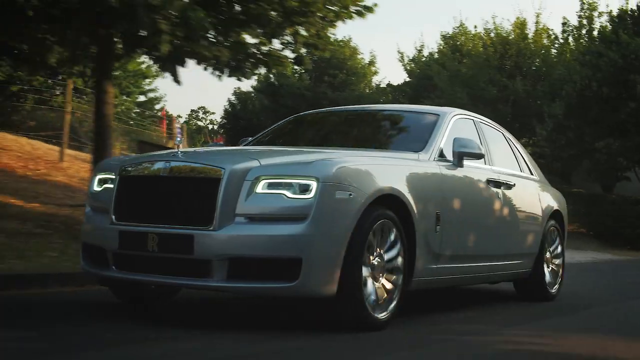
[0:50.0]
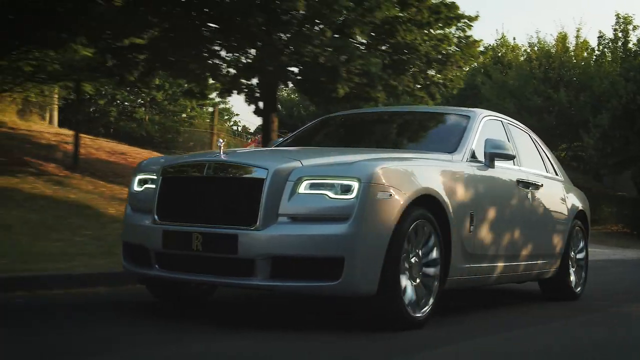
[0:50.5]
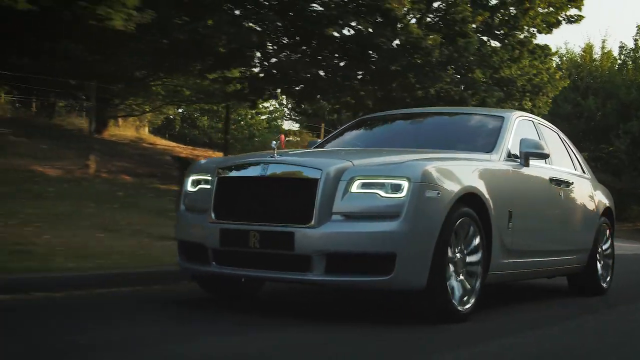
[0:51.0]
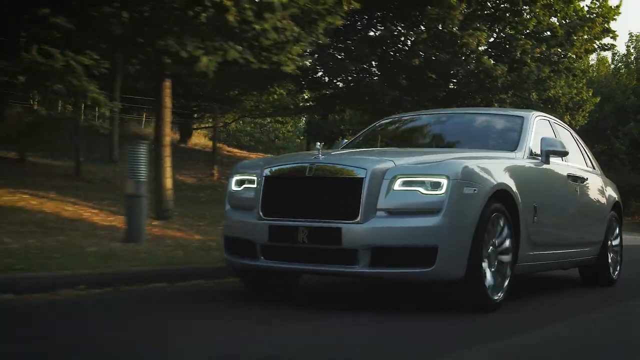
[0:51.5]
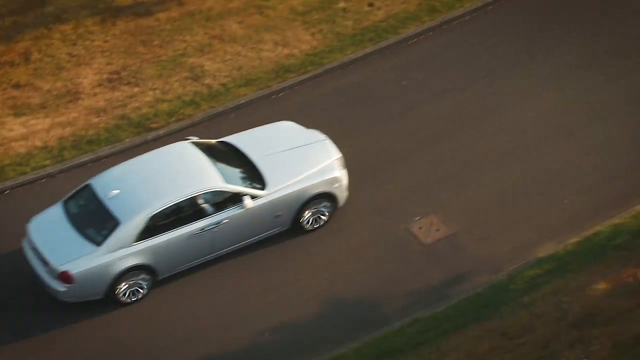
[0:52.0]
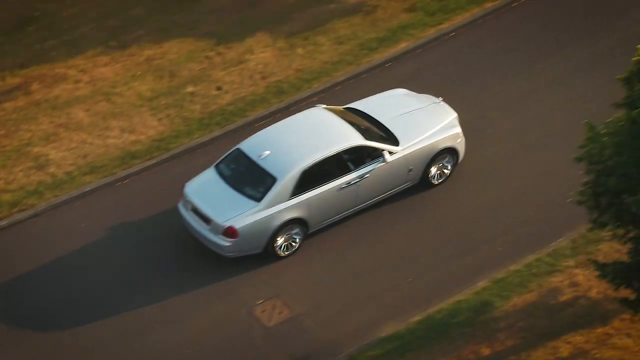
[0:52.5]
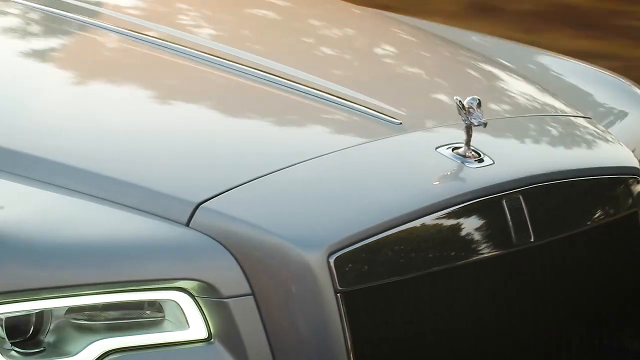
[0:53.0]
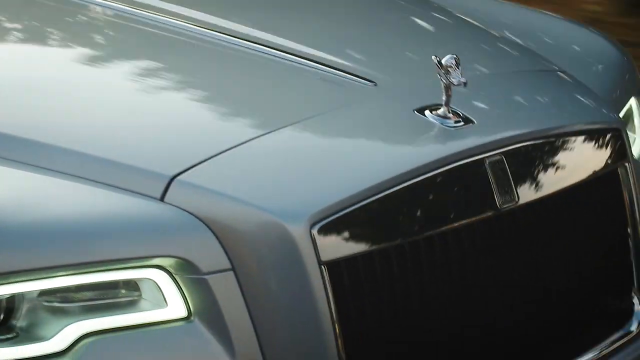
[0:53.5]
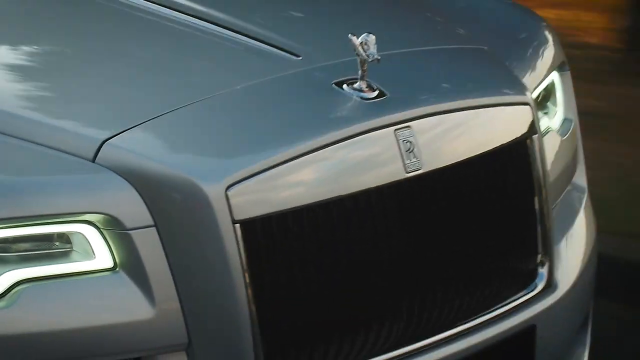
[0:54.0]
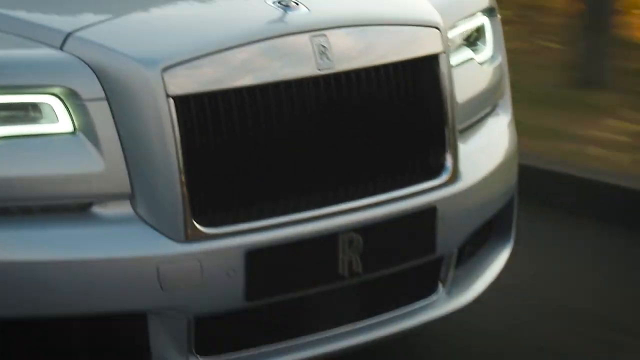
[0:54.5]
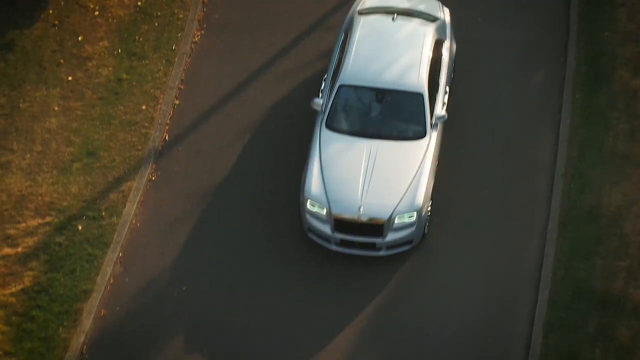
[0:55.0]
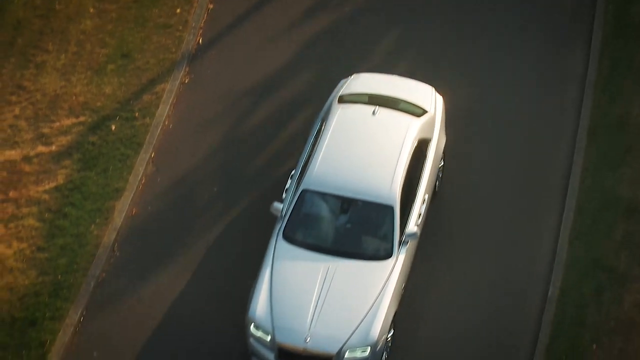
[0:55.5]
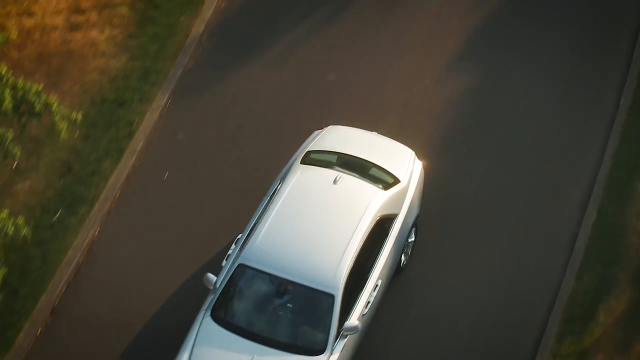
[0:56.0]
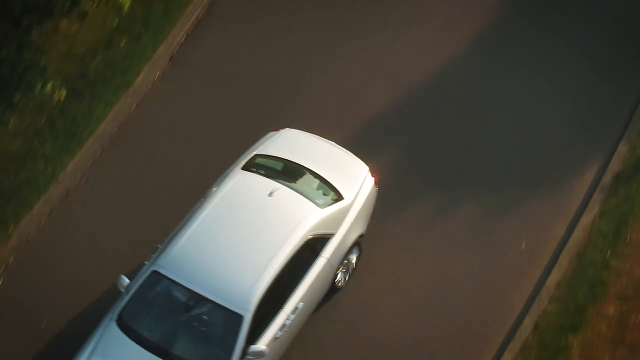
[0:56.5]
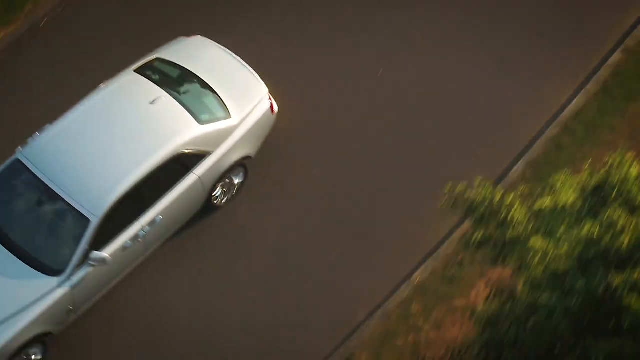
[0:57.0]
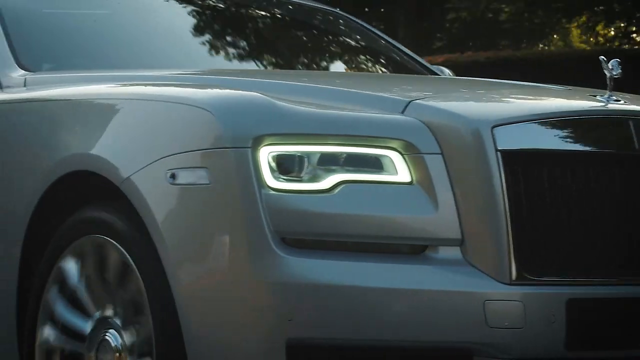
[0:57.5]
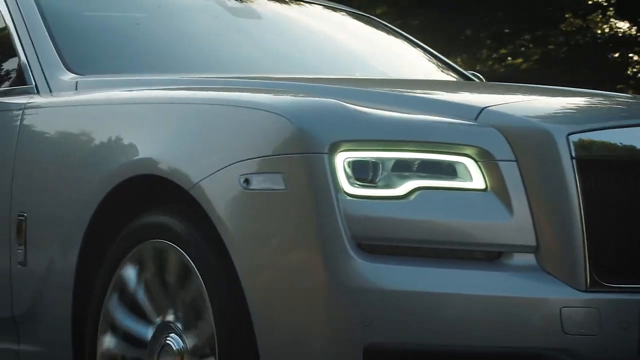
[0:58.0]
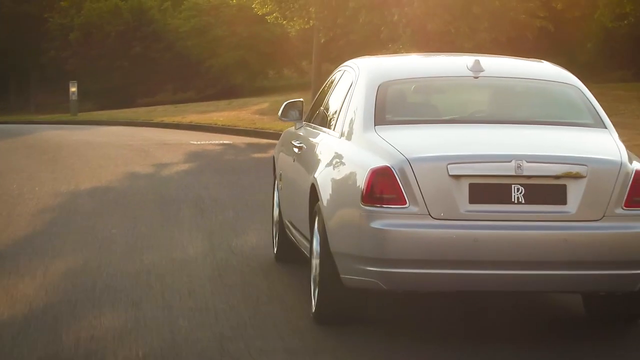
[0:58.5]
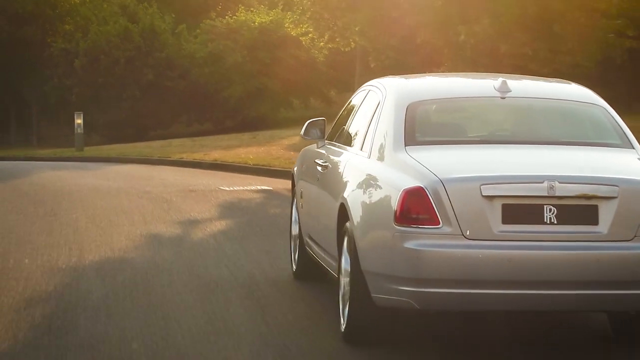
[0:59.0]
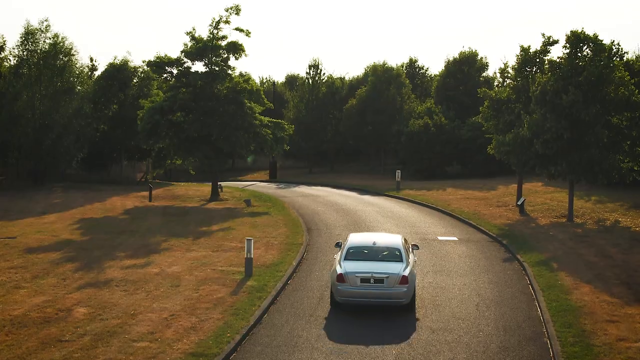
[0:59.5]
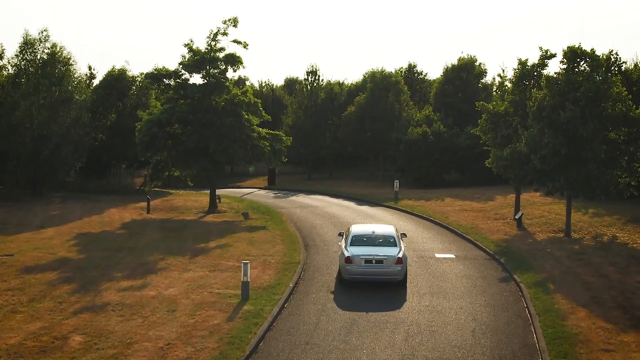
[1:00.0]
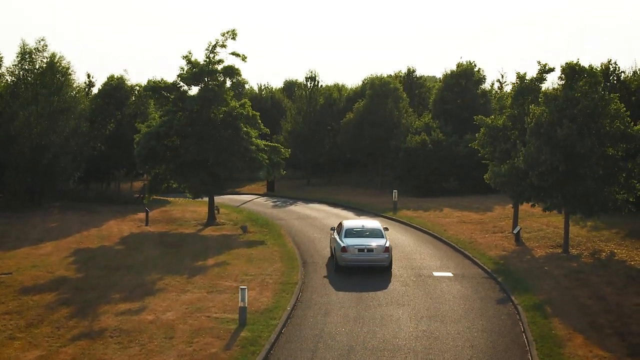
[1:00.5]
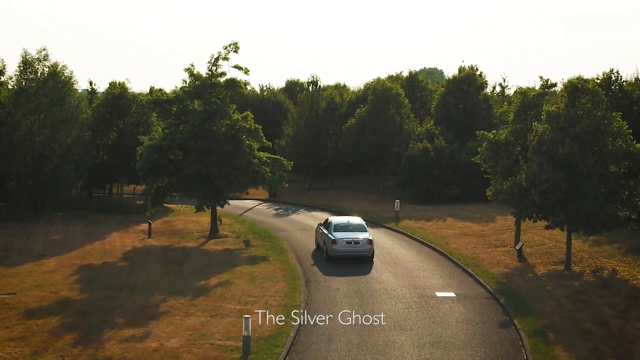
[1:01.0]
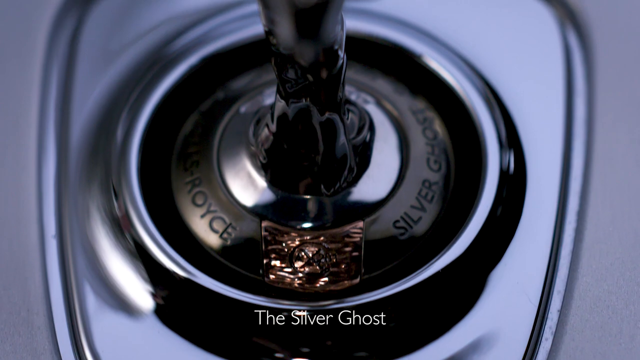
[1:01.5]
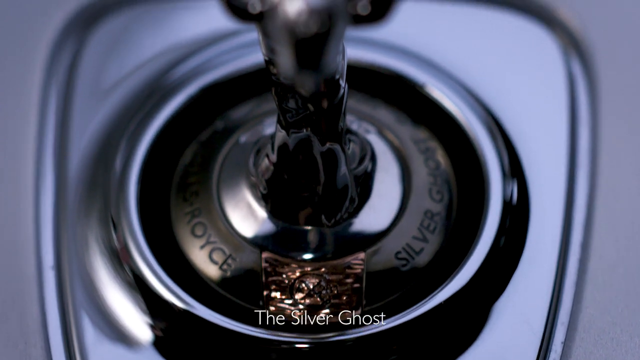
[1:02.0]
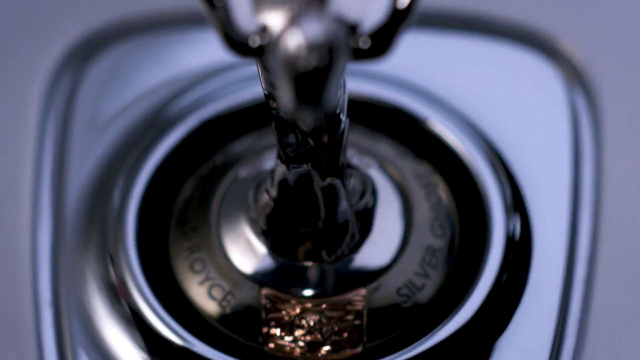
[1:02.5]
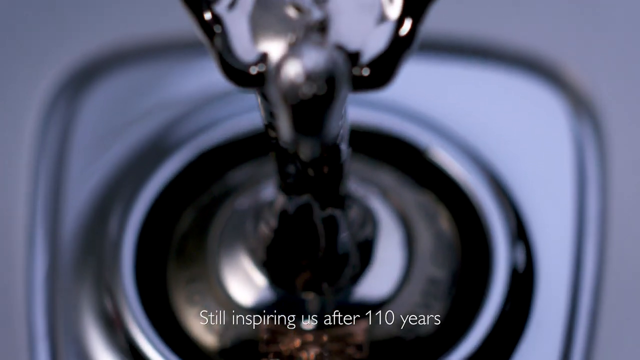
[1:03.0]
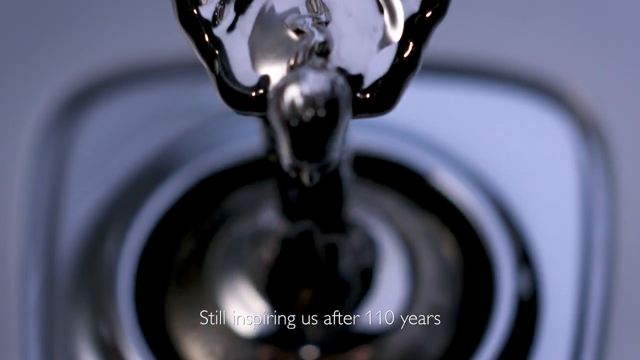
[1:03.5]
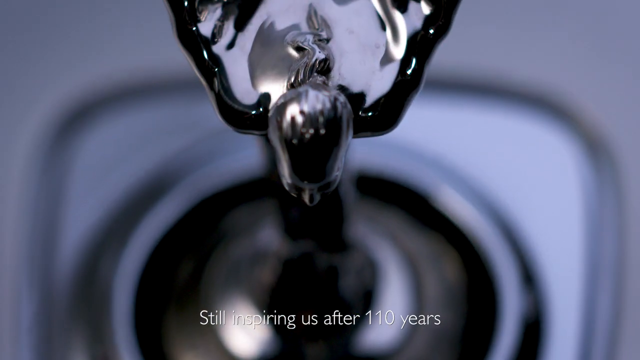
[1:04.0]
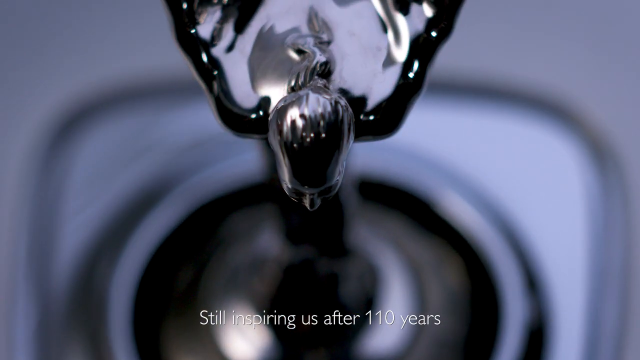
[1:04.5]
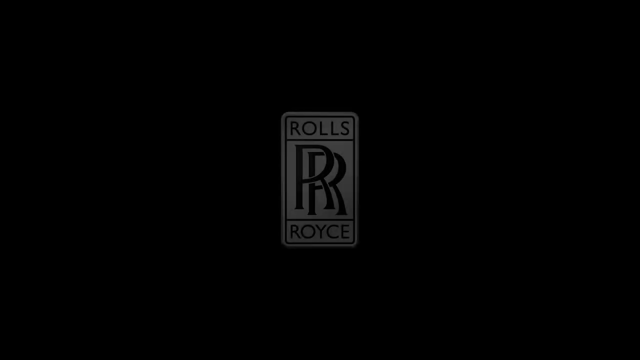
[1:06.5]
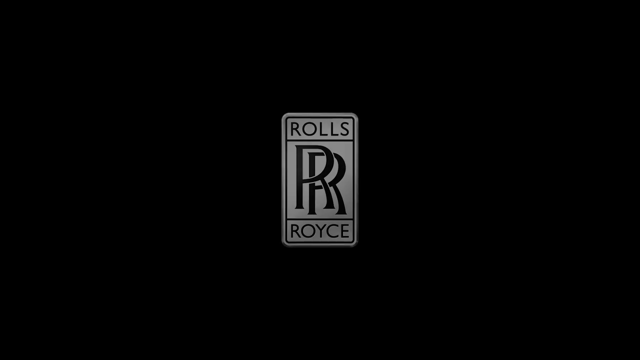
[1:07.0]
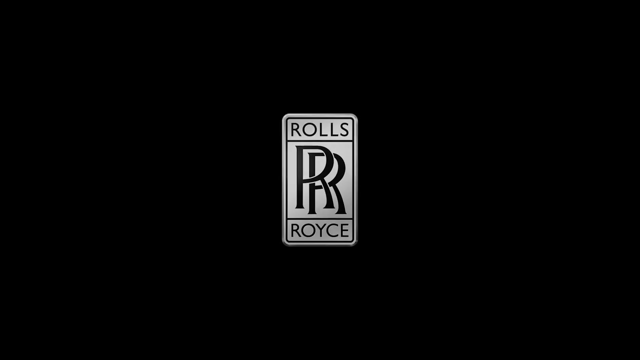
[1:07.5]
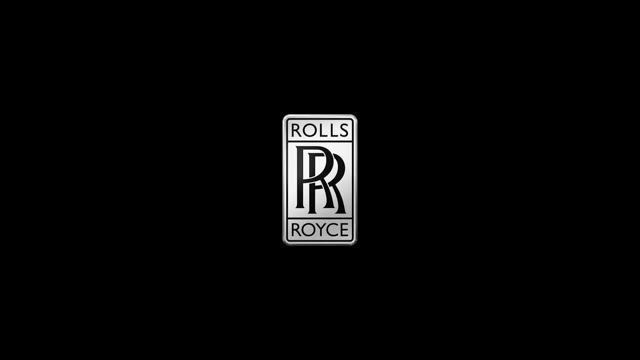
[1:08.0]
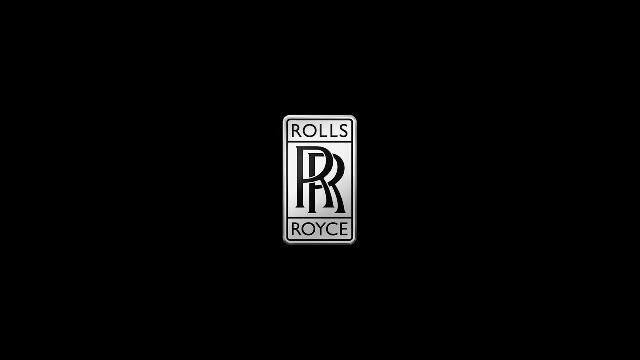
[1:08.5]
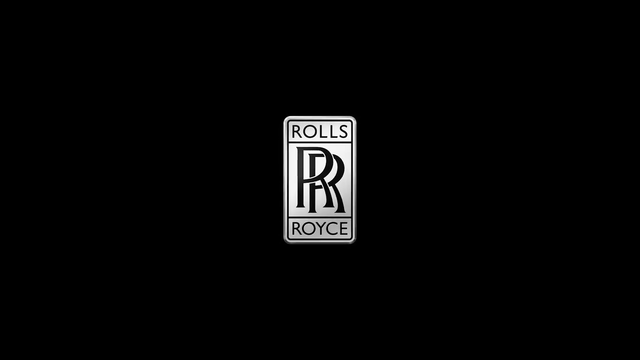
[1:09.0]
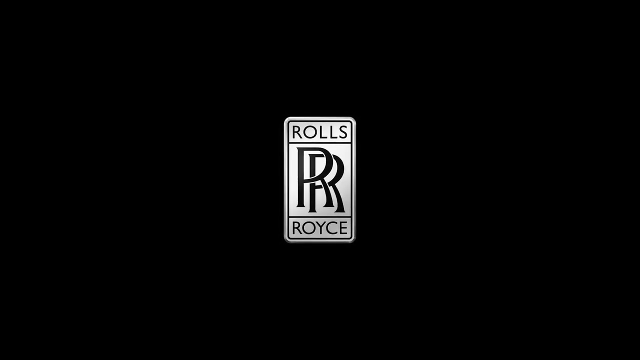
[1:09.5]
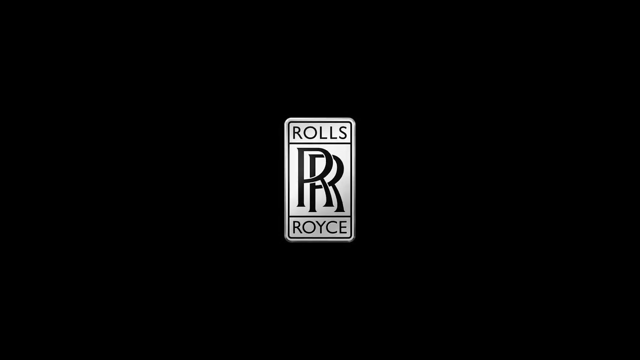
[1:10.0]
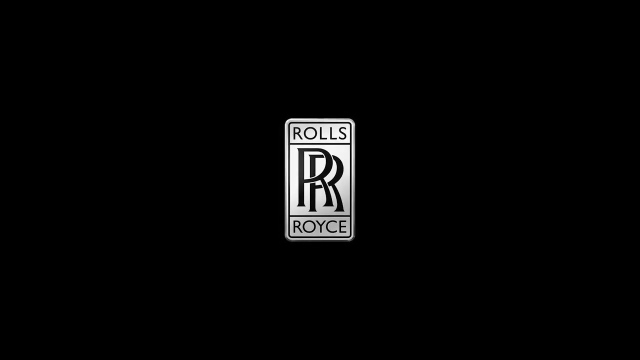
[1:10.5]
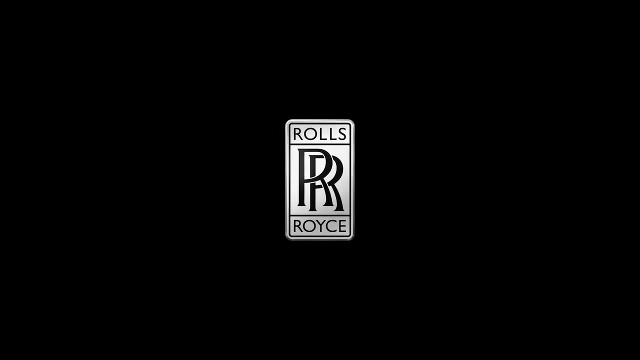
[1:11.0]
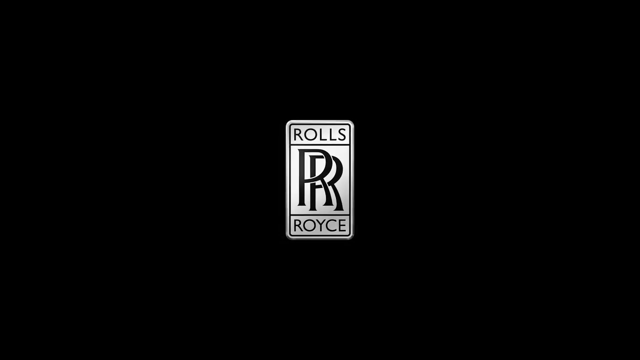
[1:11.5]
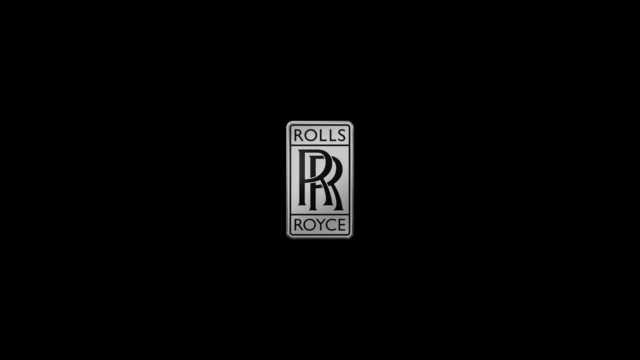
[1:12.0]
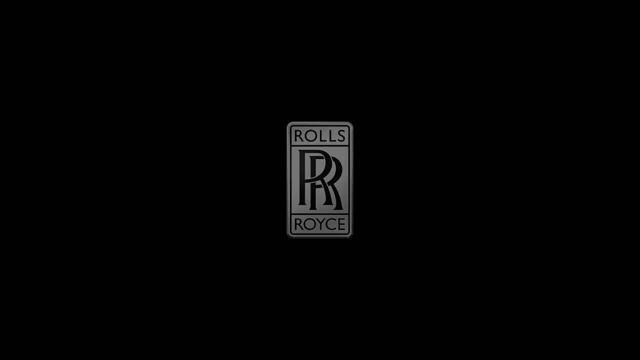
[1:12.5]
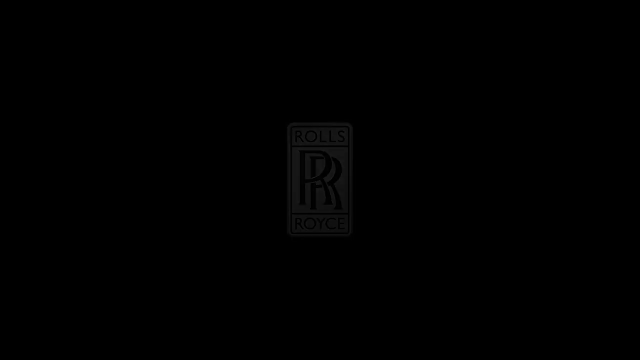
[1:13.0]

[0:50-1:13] A Rolls Royce drives down a road, with the camera showing it up close. The medallion on the front hood is visible, with the RR plaque underneath it, above the grill. The lights are on and the sun is out, with some shadow from the trees. The car goes around a large bend; both sides of the street are very tree-lined, and there is a lawn that is a little burnt out and brown. The medallion is shown up close, revealing how it is attached to the hood: its round base appears to be inserted into a round area attached to the top right before the trunk. There is a black grill underneath it, and the car is silver. At the end, text reads "Rolls Royce" with a little box that has "RR" in the middle.